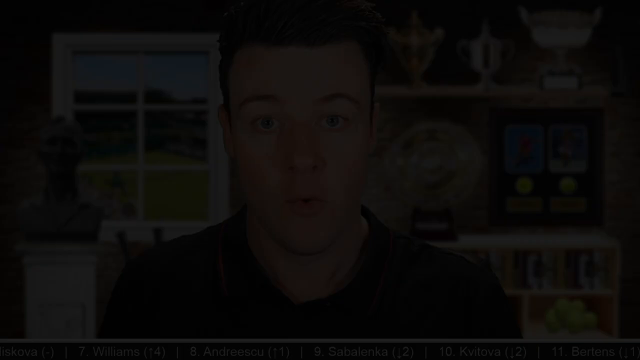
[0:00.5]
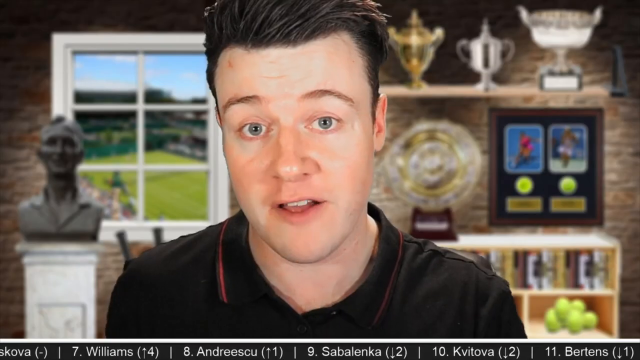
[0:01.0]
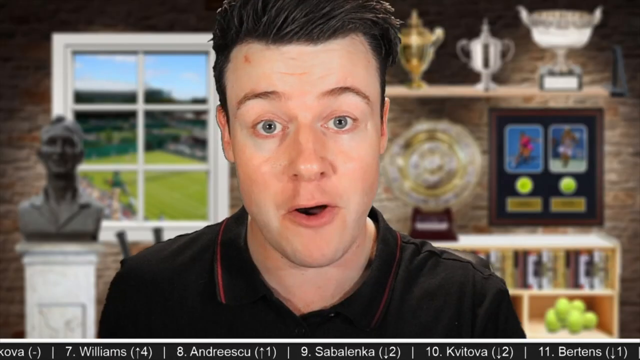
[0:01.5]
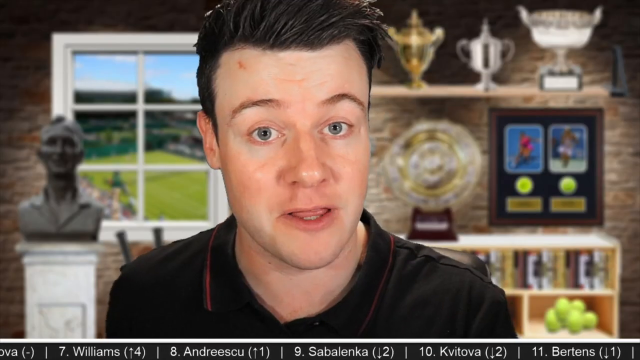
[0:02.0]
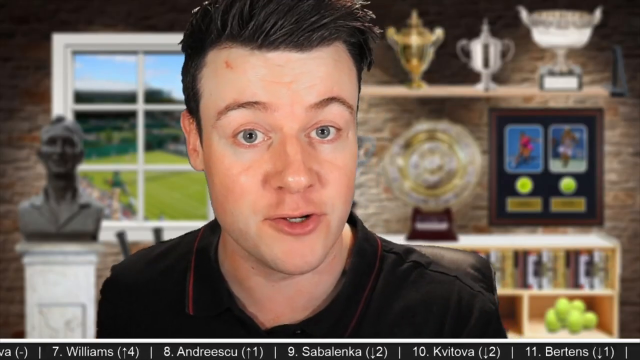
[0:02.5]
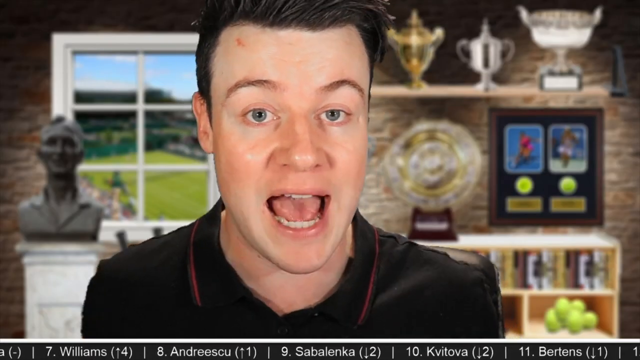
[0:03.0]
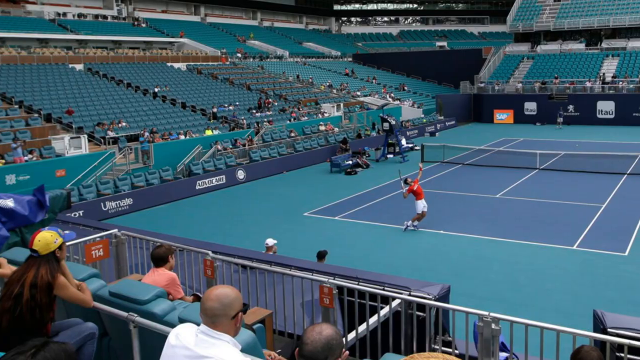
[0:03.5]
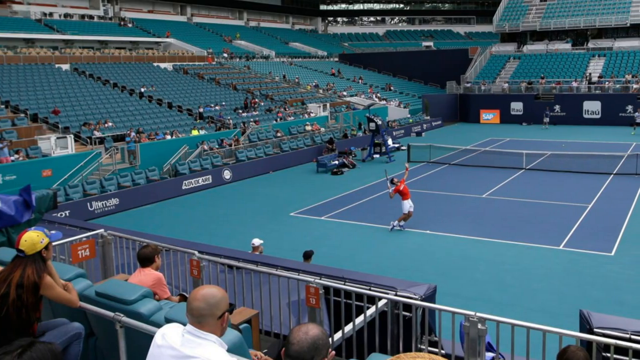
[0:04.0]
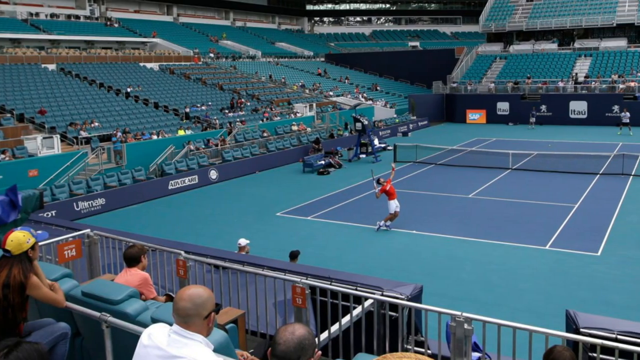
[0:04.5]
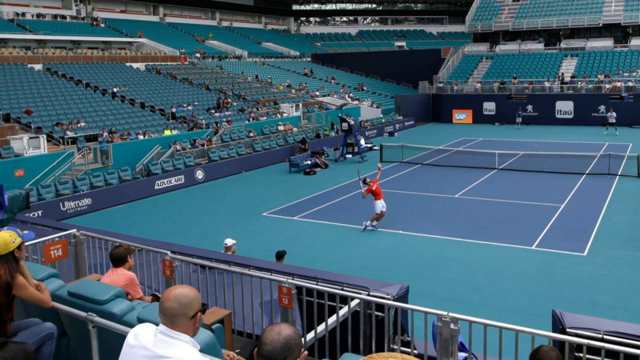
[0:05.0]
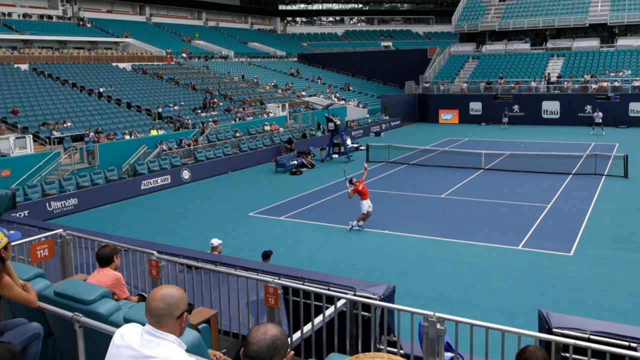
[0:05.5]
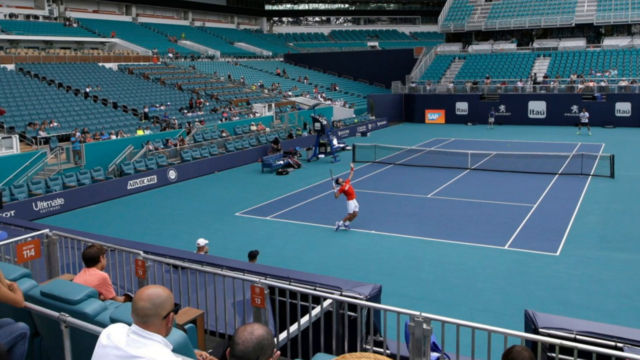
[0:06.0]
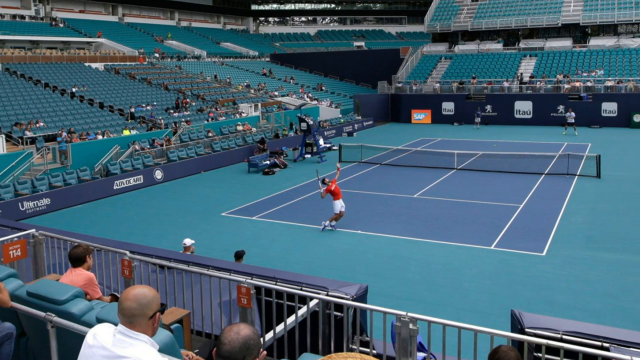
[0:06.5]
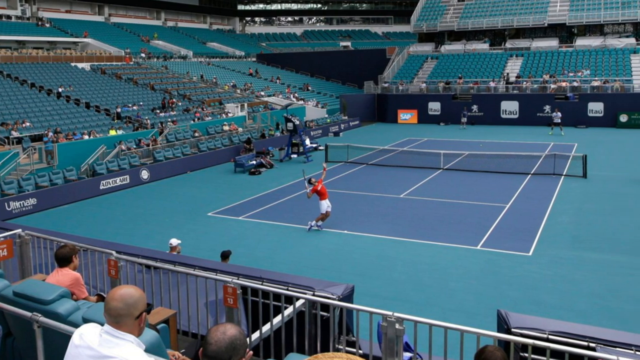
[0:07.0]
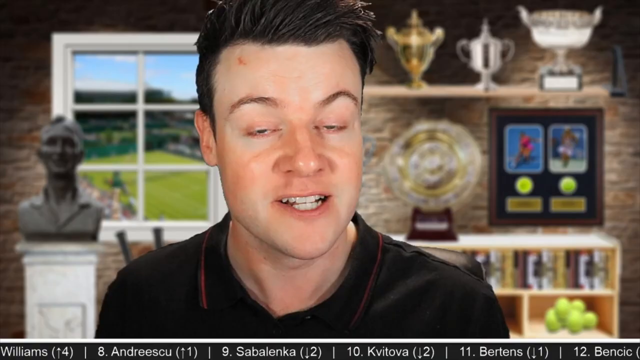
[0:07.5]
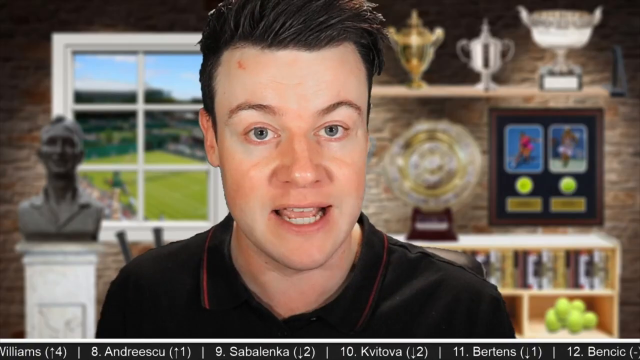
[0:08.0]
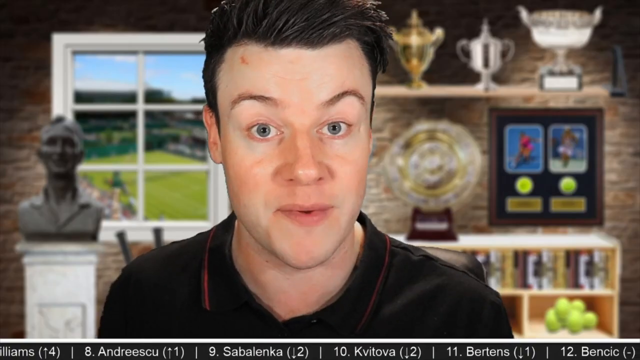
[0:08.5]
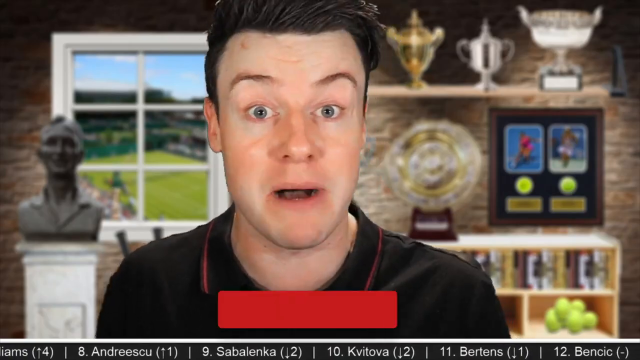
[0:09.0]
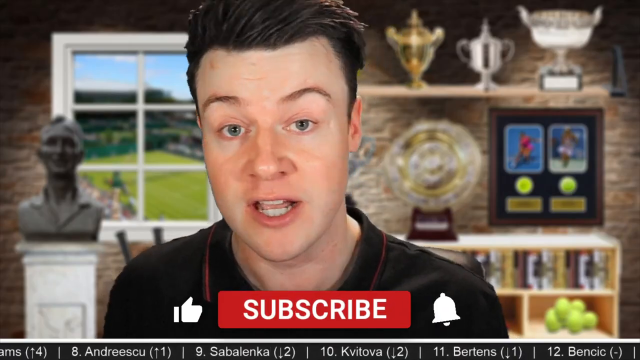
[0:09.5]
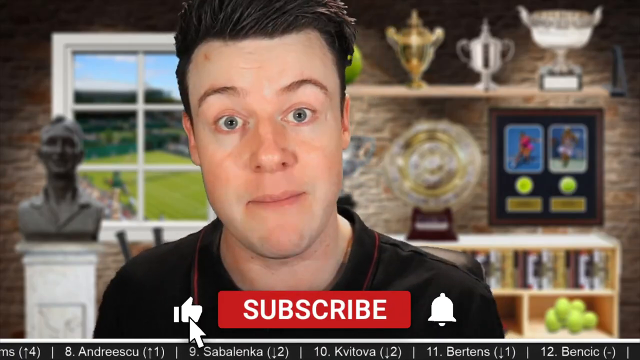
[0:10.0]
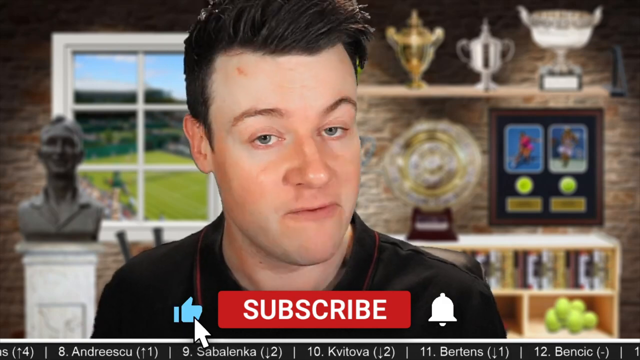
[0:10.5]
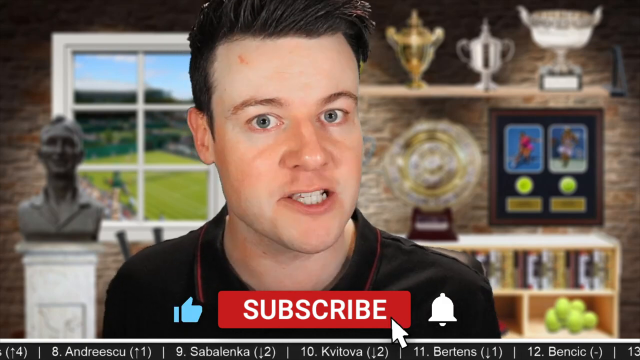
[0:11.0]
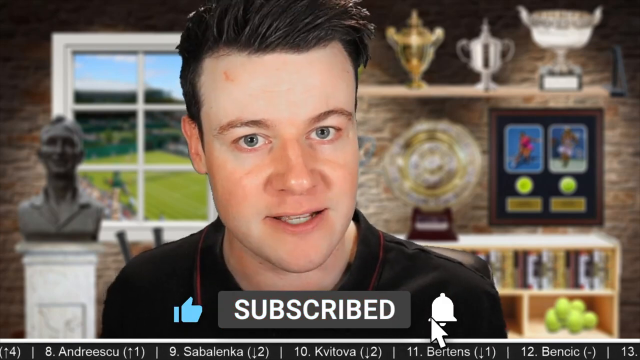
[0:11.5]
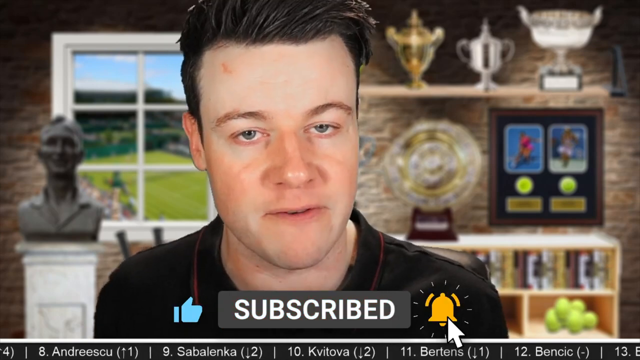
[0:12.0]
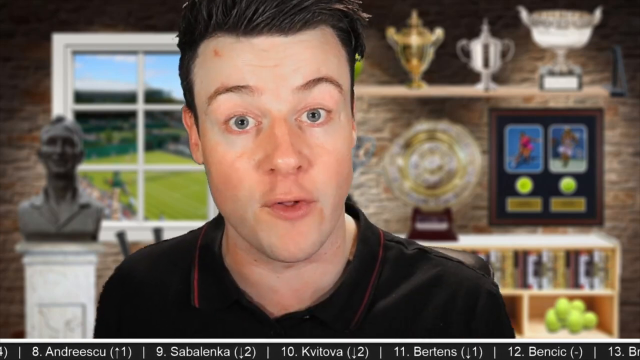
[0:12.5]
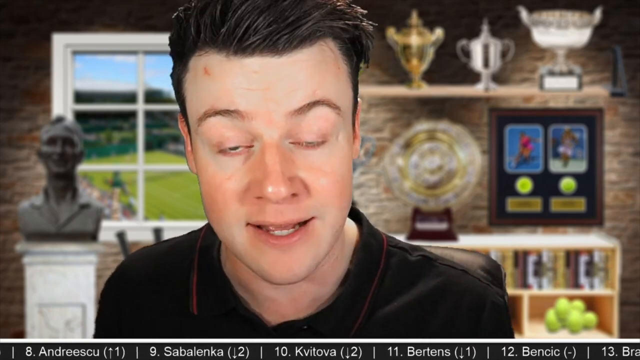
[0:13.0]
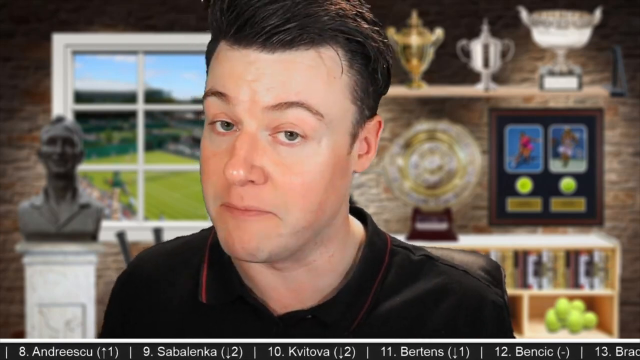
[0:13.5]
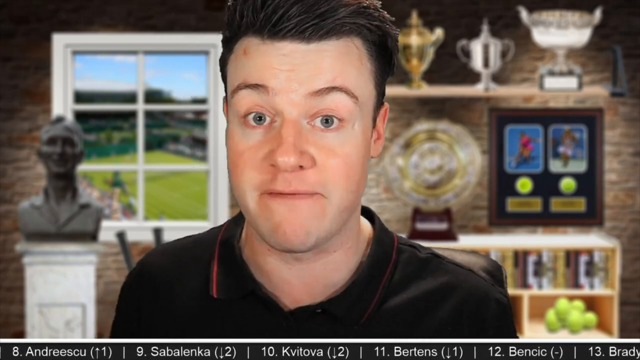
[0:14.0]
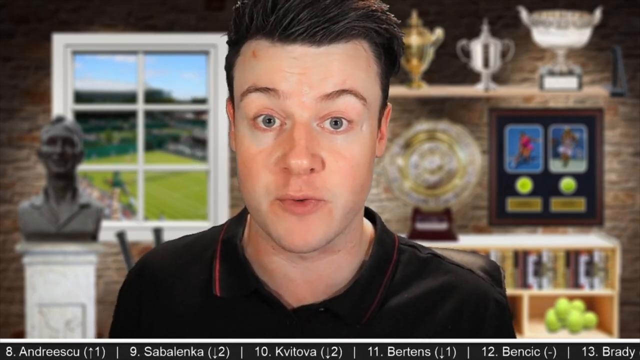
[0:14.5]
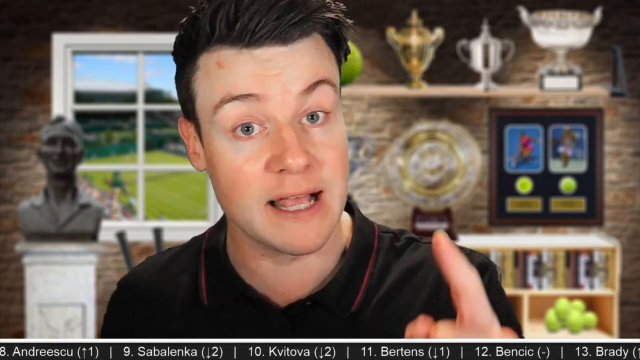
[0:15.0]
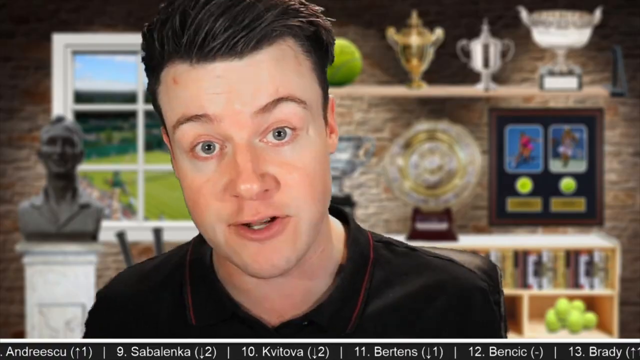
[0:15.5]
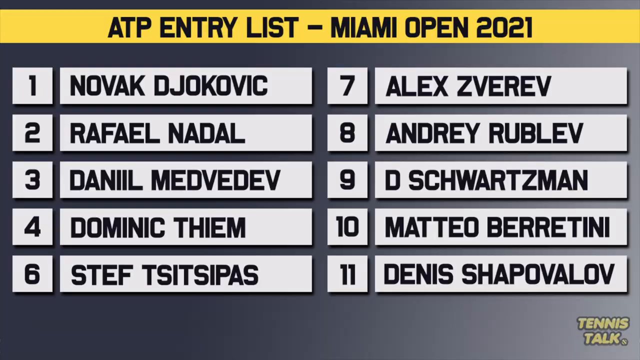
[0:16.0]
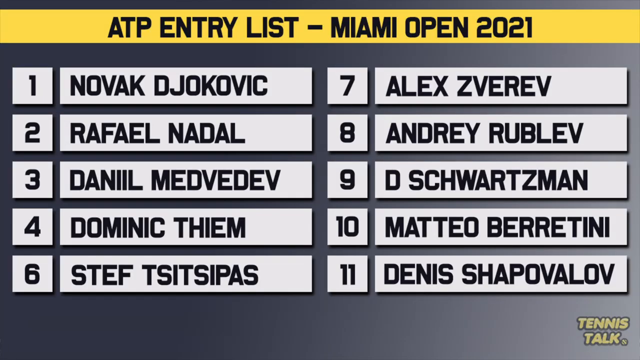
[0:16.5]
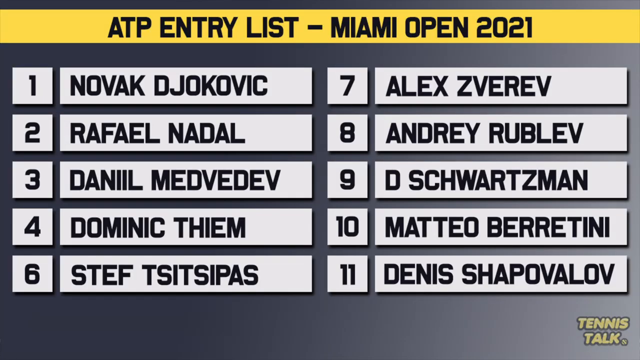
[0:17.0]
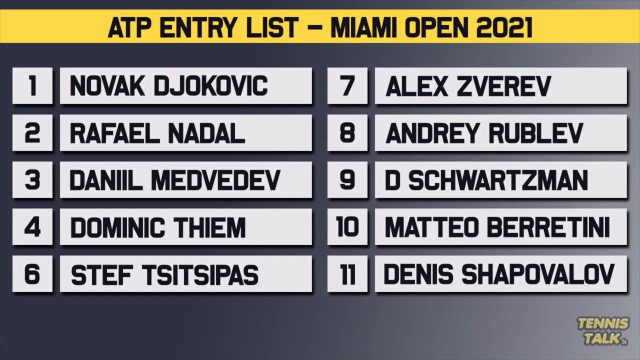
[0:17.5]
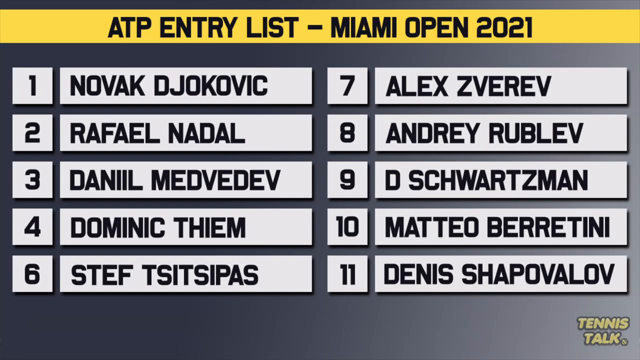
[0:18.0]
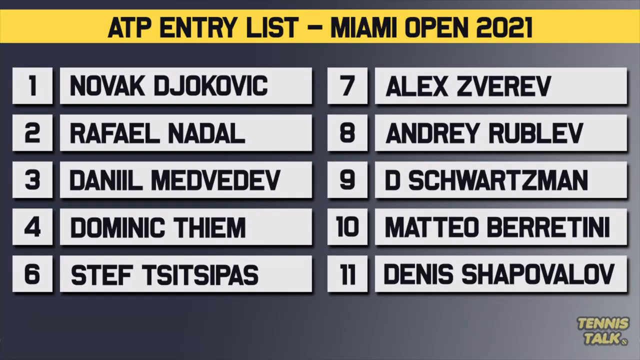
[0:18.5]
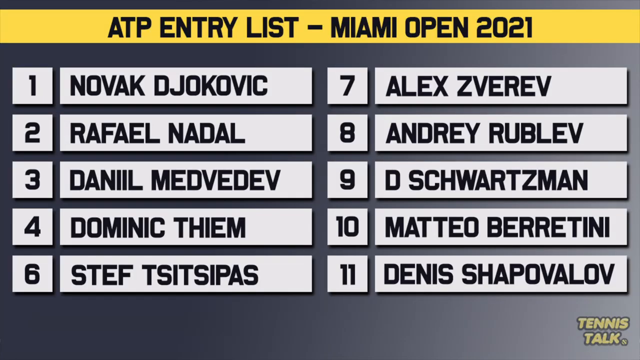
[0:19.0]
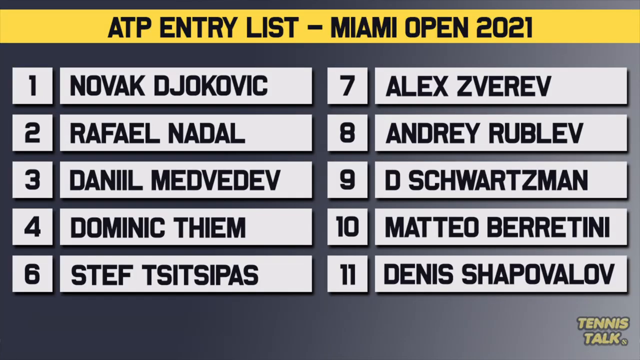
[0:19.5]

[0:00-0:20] A man who looks to be in his 20s, with fair skin and brown hair sort of combed to the right, wearing a black polo top, talks to the camera. Behind him is a statue of someone, shelves holding trophies that look like tennis trophies, and a window on the right showing what looks like a tennis court with green grass. A picture of an indoor tennis tournament appears: a blue court, a player in a red shirt serving the ball, and not many people in the stands. At the bottom of the screen "subscribe" comes up in white letters on a red background, and a mouse pointer clicks the like button and the subscribe button. The man keeps talking, and a list of what looks like the top 11 seeds appears, starting with Novak Djokovic.